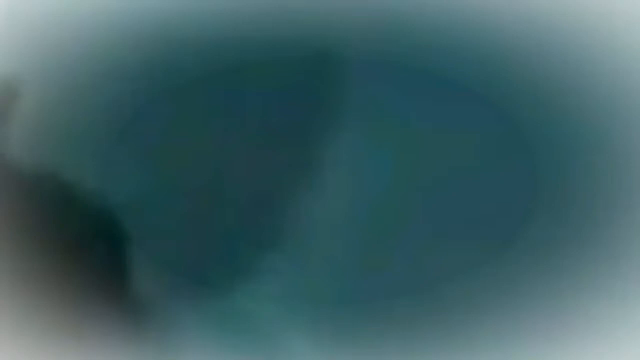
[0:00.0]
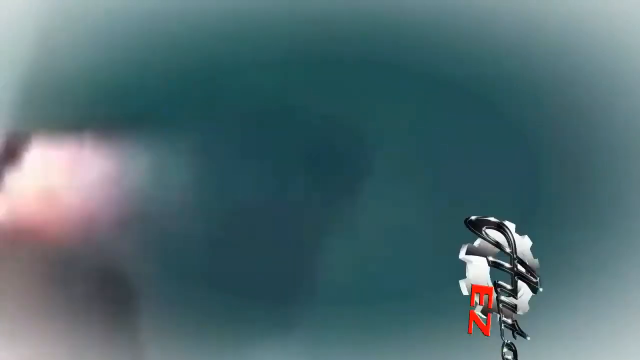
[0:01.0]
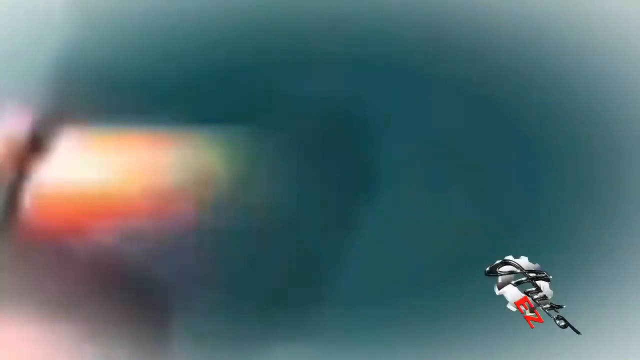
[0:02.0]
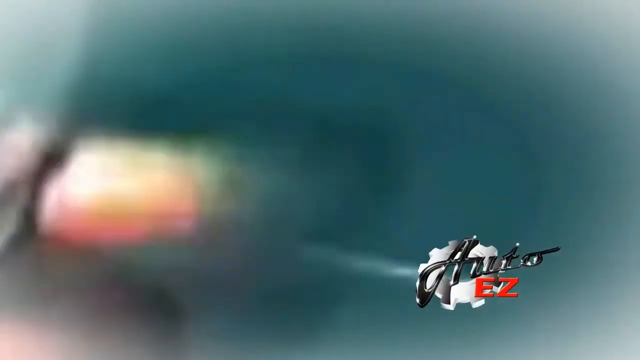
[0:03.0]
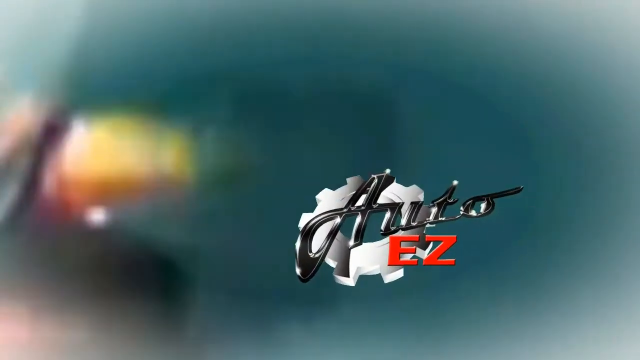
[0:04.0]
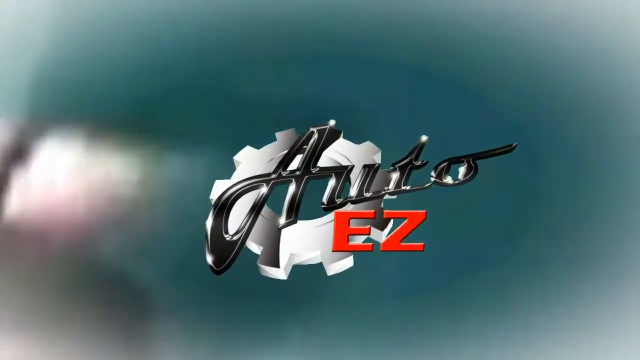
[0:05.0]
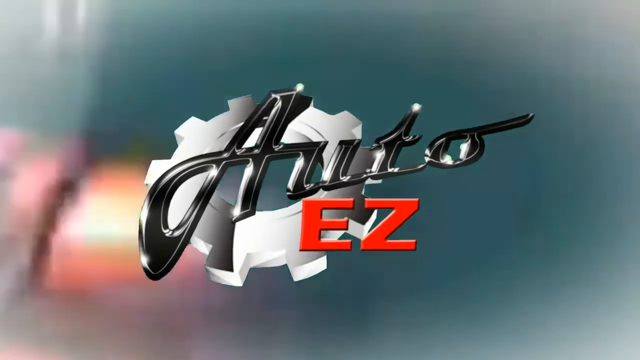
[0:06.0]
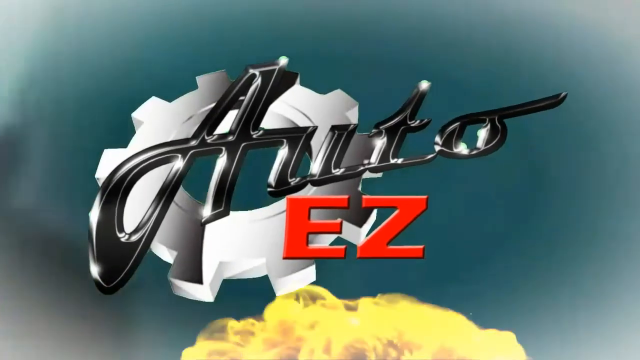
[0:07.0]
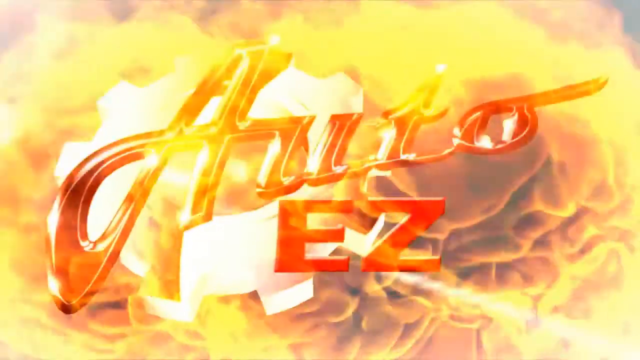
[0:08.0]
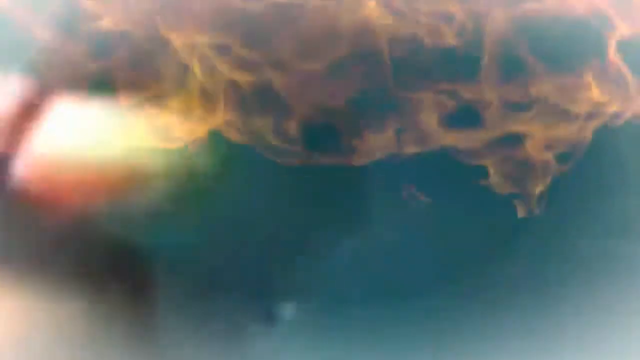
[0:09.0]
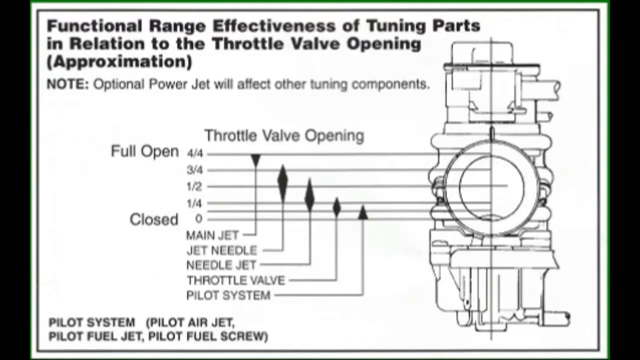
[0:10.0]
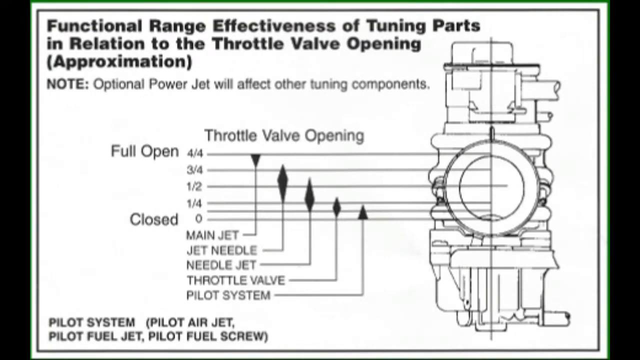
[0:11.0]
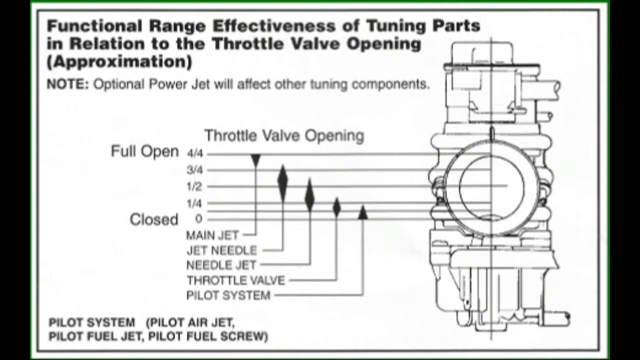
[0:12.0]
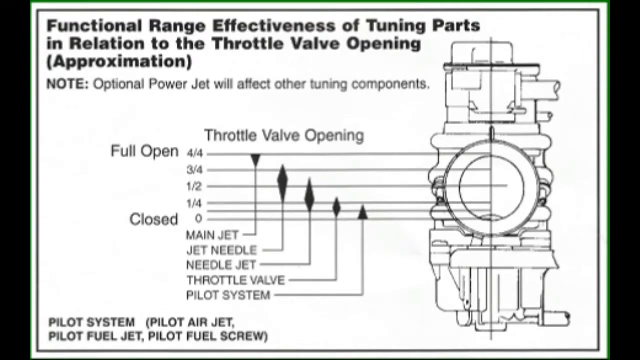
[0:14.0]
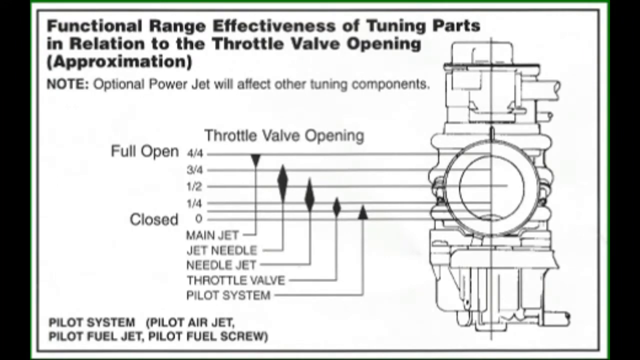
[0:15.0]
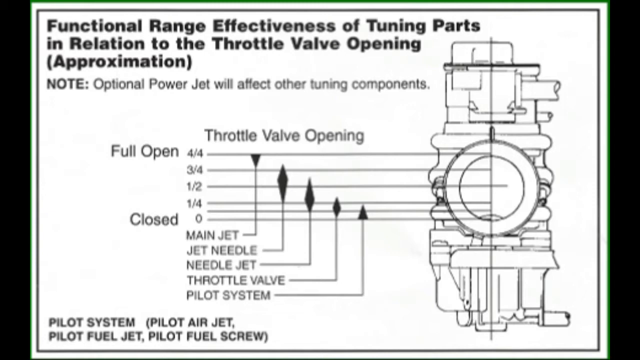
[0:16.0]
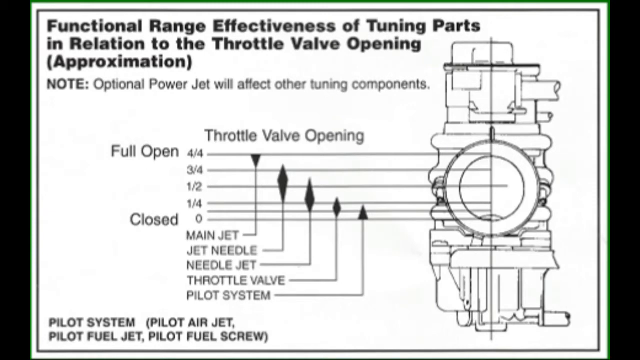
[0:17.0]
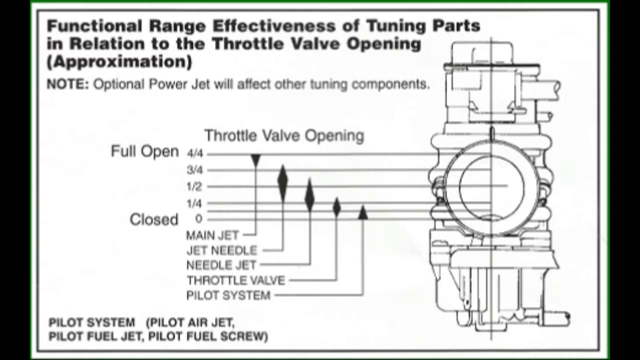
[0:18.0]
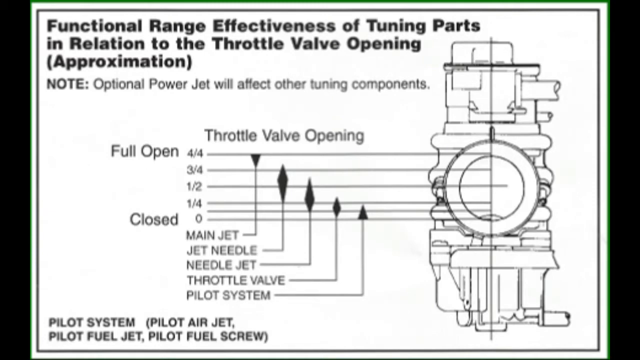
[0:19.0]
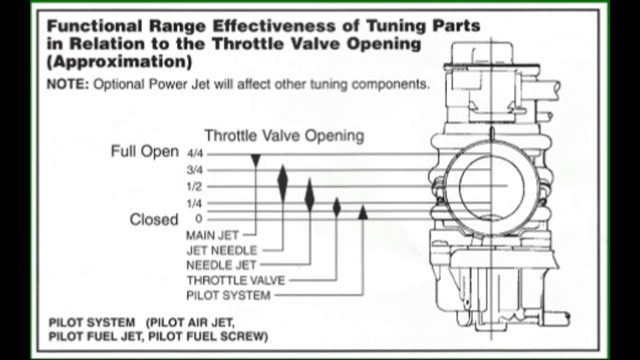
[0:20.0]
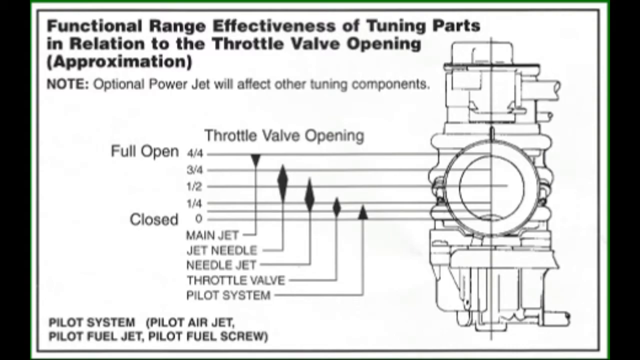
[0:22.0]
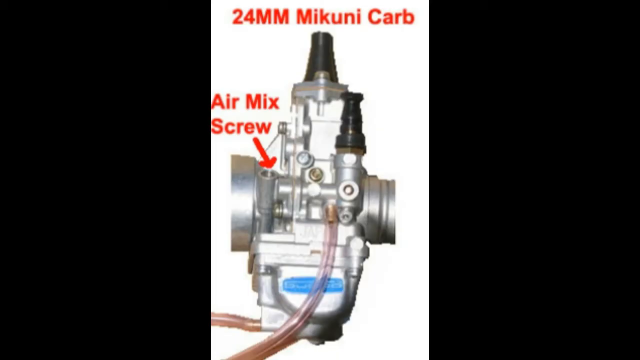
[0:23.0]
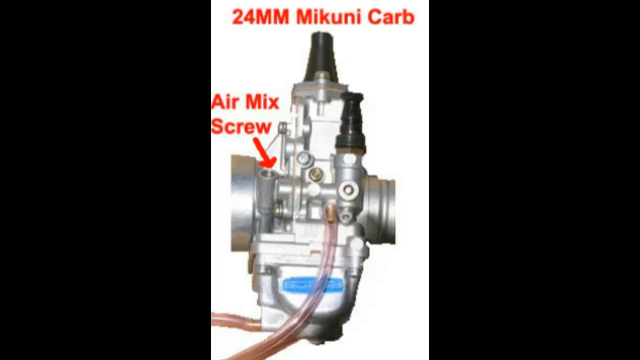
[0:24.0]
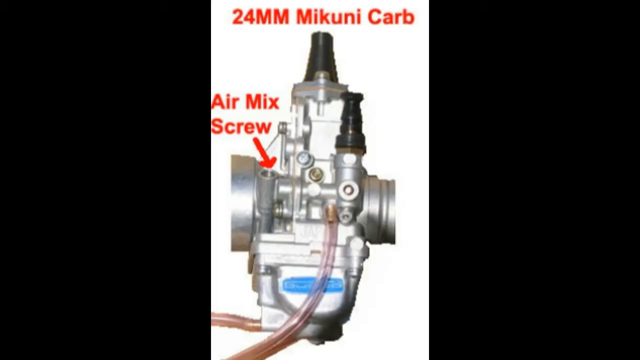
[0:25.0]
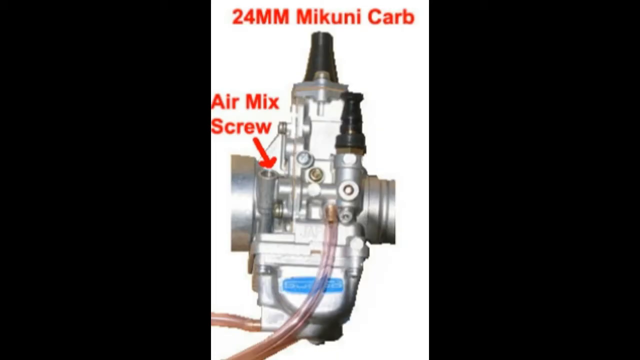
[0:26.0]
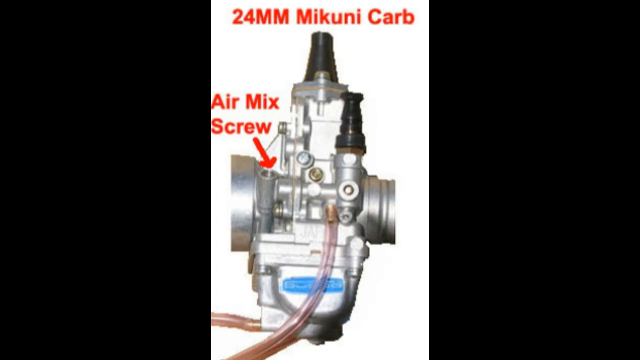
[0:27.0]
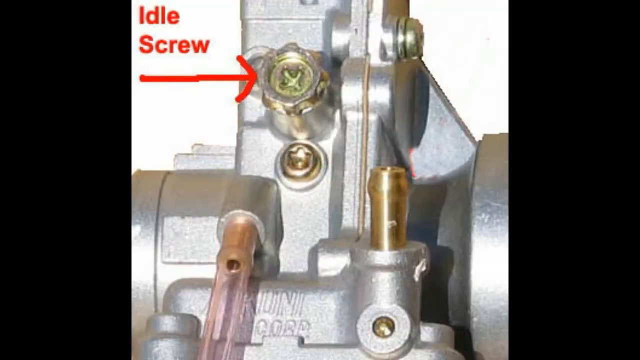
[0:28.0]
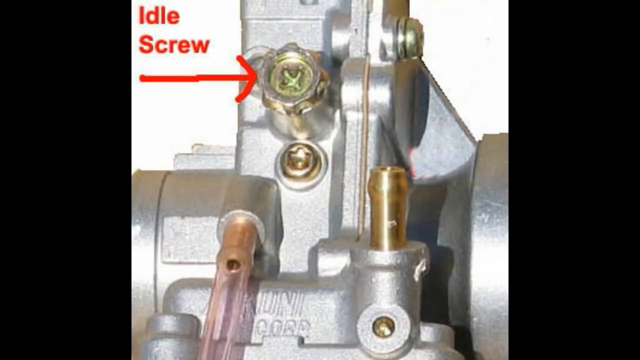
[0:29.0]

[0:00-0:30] A low-quality image appears, followed by branding for Auto EZ. A complicated still-image diagram of throttle valve opening follows, showing the different parts, including the 24 millimeter McKinney carb, the air mix screw and the idle screw. The background of the Auto EZ video is very blurry at first, and the video seems fairly old. There is also a fire animation. The images shown are still images.